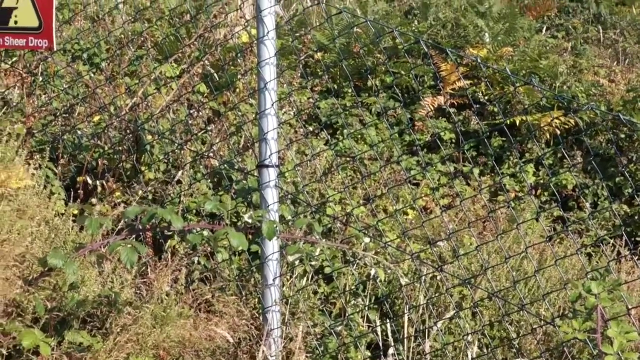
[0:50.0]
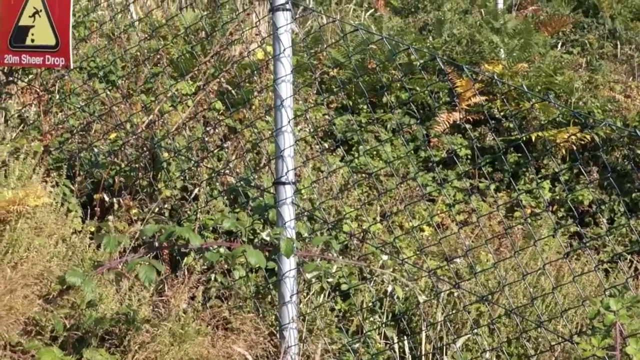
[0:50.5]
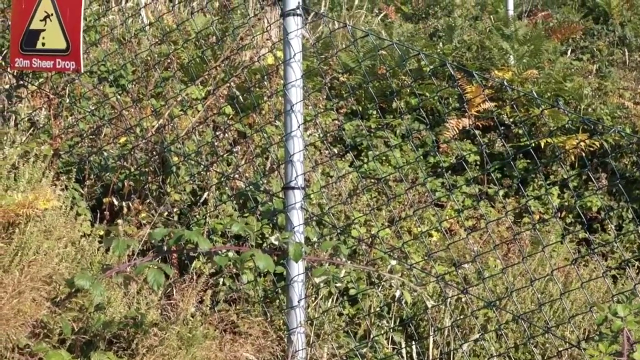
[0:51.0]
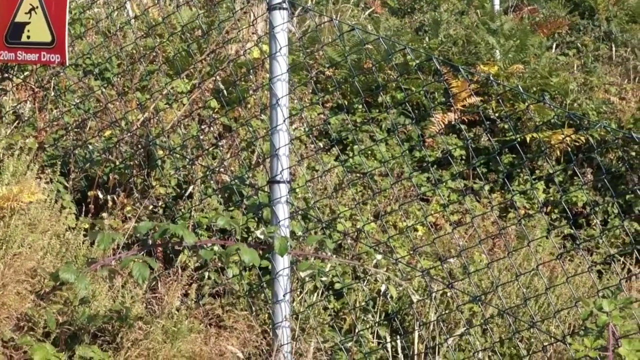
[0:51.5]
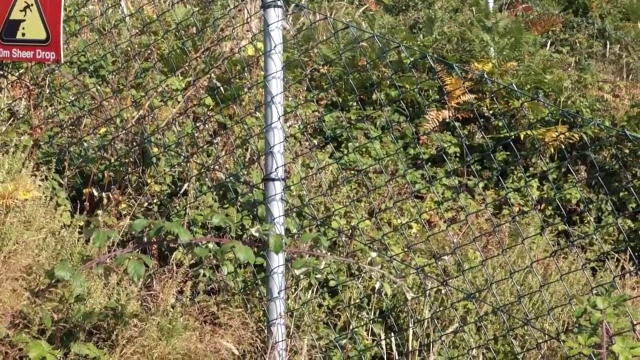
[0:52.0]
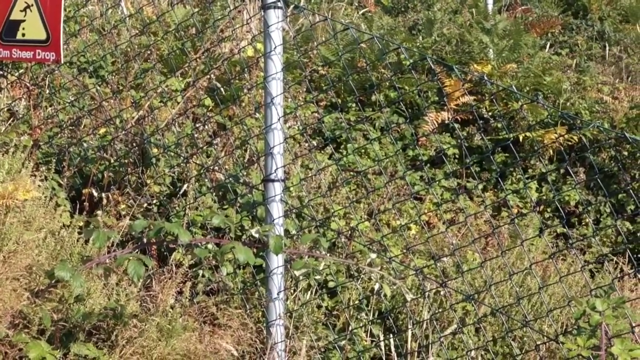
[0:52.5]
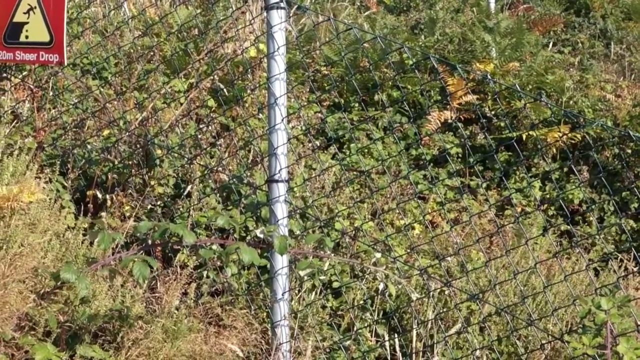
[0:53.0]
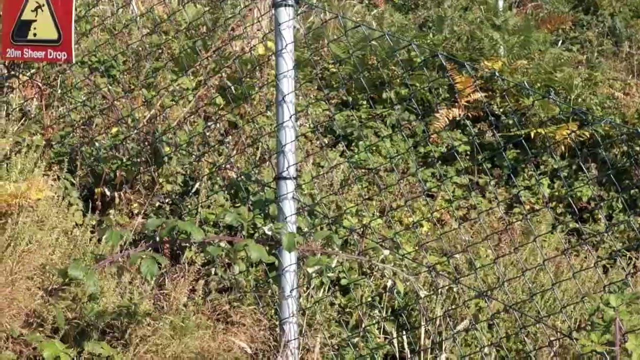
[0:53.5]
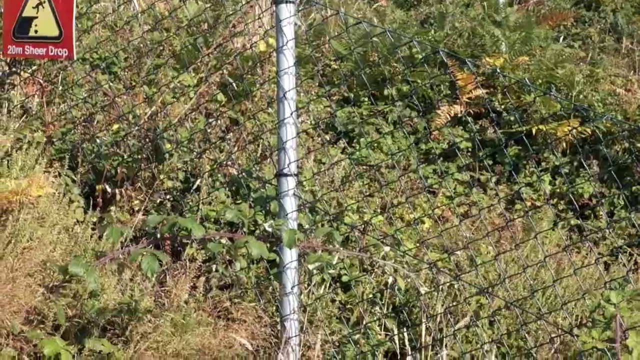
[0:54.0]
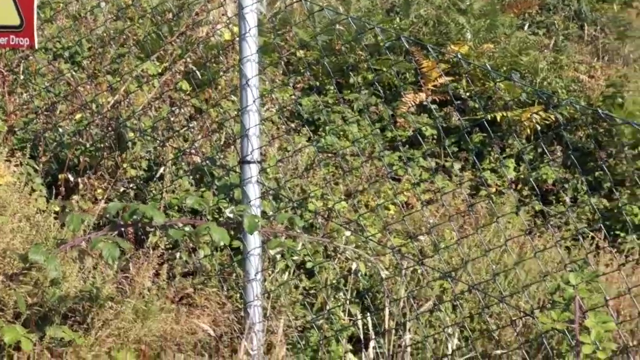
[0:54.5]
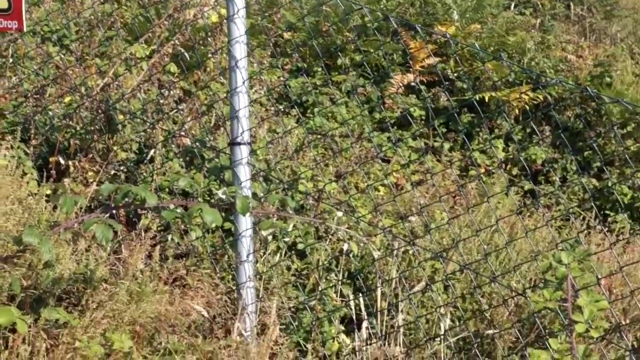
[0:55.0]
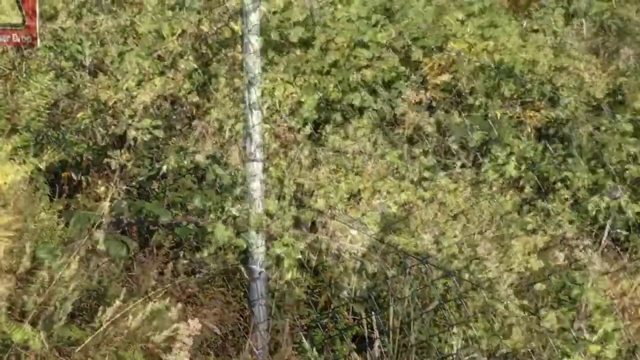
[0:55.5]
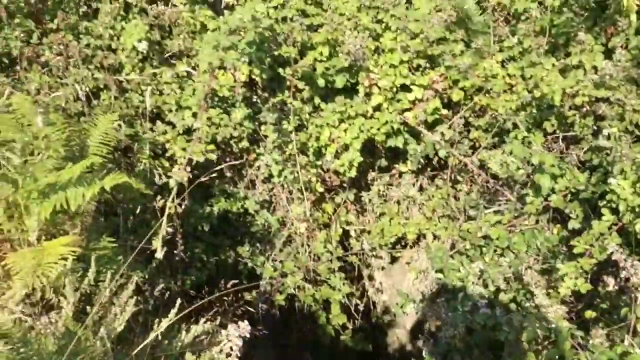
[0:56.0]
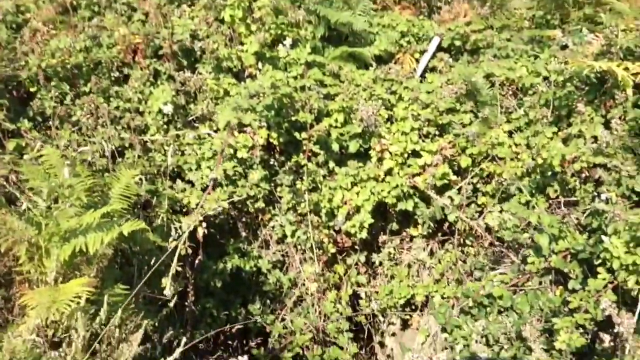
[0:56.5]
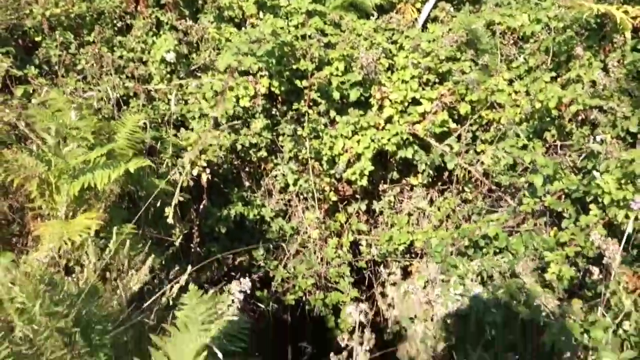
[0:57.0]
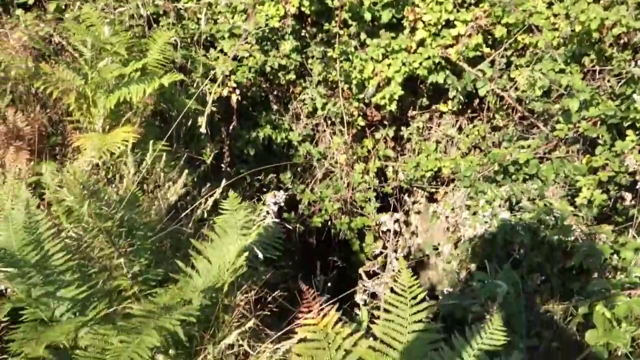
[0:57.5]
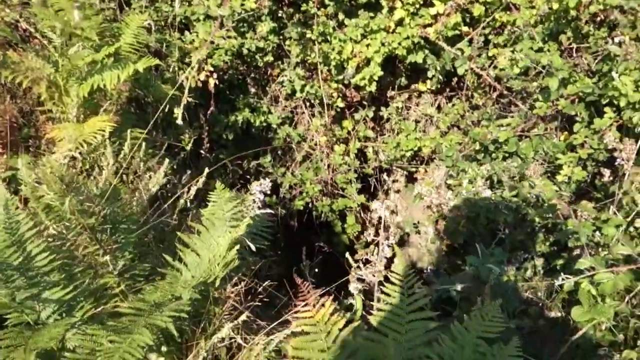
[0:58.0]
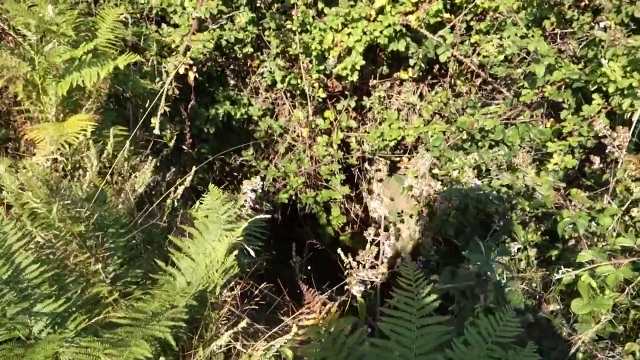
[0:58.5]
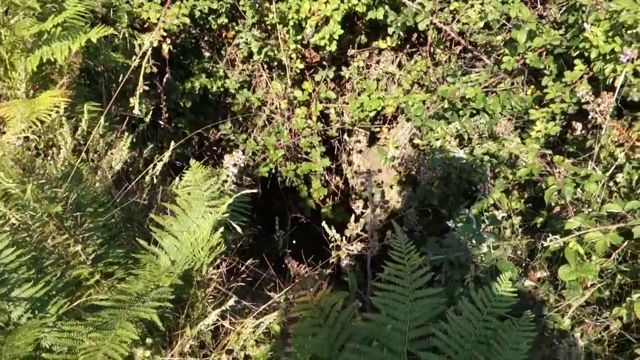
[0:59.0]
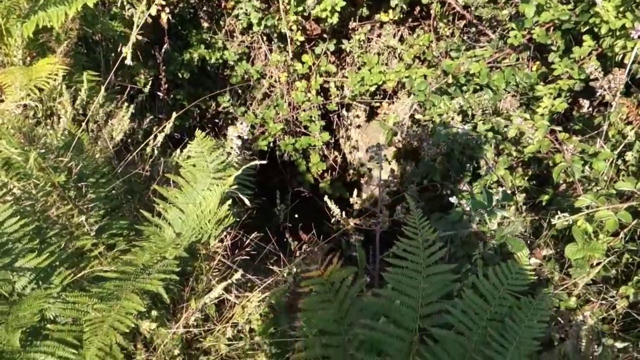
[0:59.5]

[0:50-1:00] The shot, somewhat shaky, shows vegetation with a metal pole and a metal net. It then shows what seems to be a cave, a hole in the ground, with rather bushy vegetation all around. The camera moves a lot, so the shot is unstable. The main colors in the frame are green, yellow, brown and black. The shadow of the person filming is visible in the lower right part of the frame.